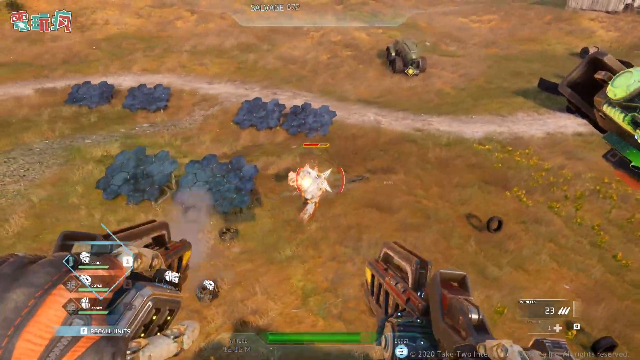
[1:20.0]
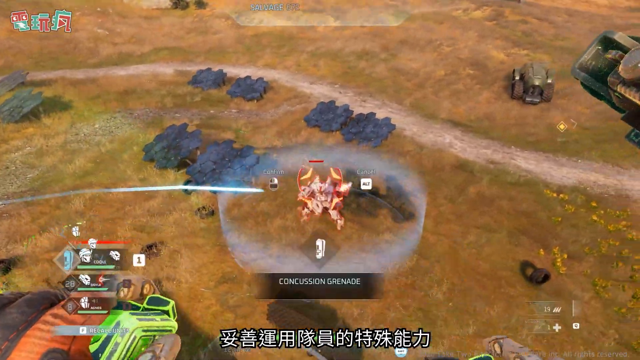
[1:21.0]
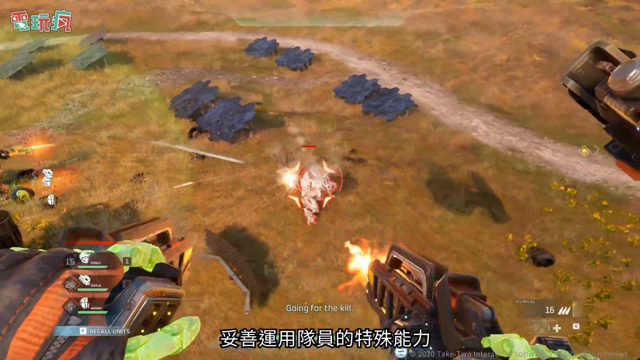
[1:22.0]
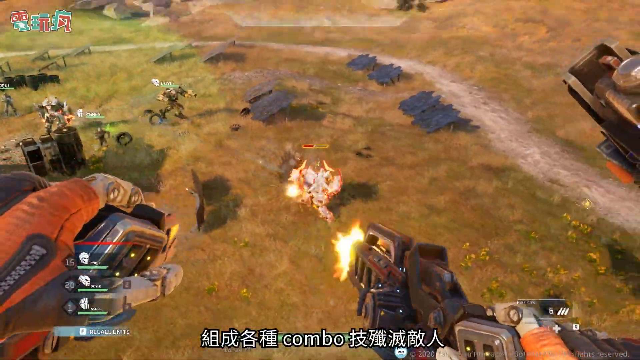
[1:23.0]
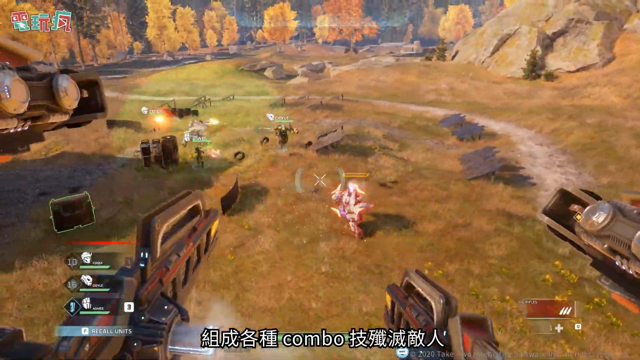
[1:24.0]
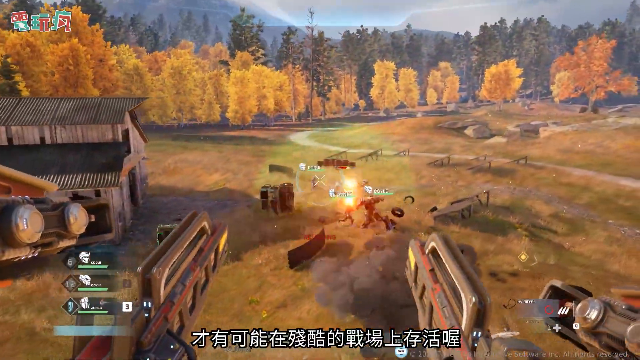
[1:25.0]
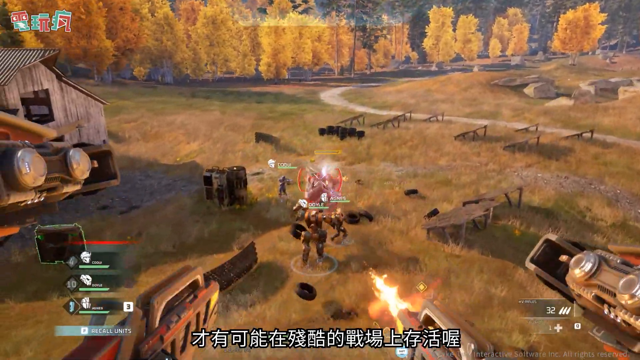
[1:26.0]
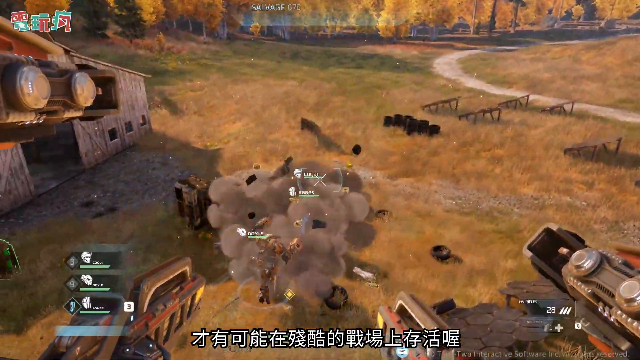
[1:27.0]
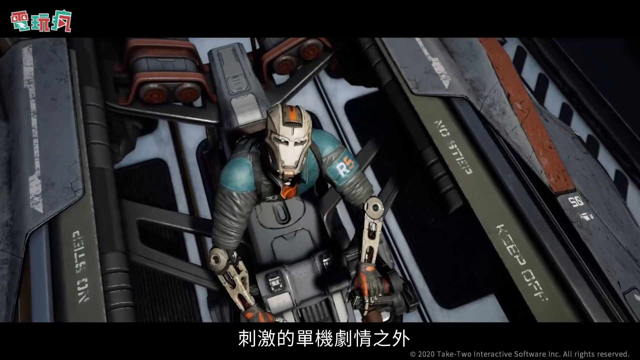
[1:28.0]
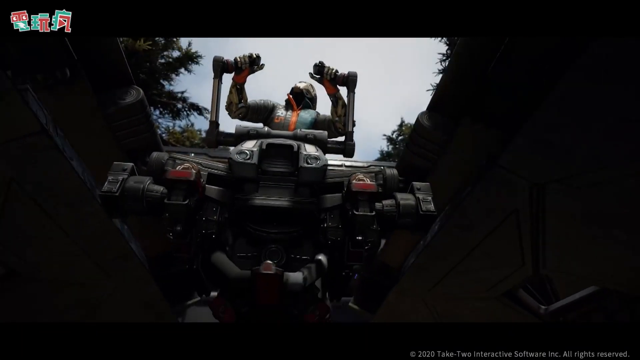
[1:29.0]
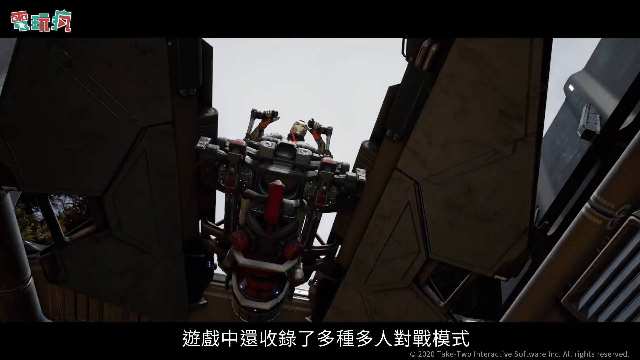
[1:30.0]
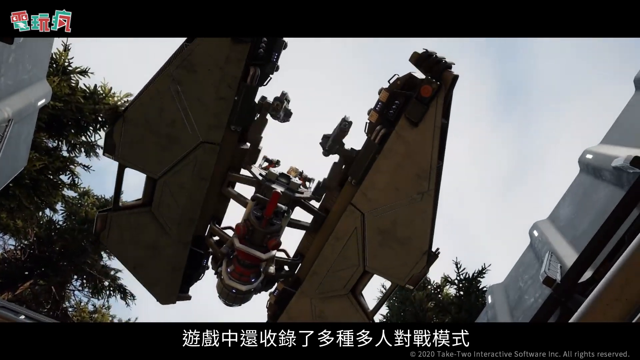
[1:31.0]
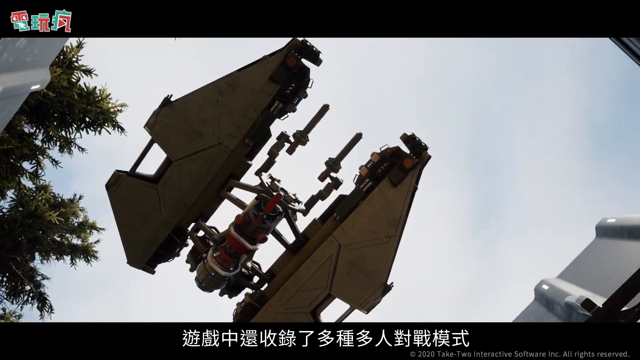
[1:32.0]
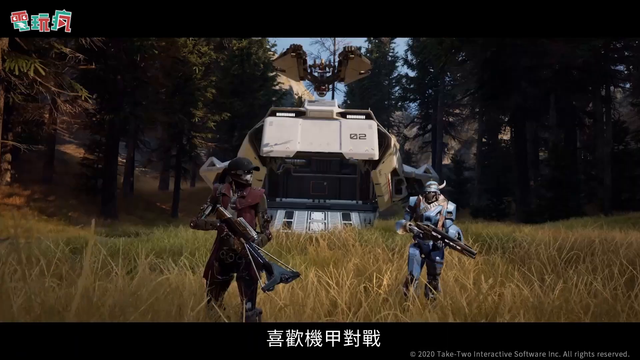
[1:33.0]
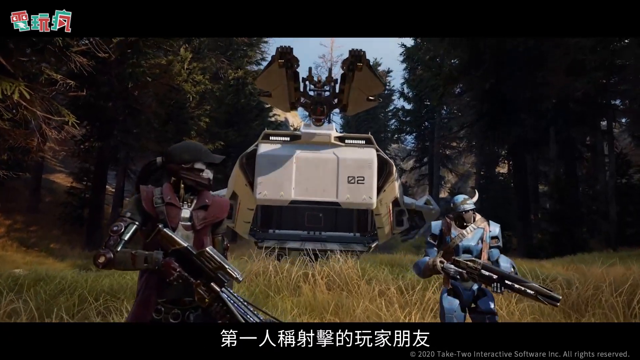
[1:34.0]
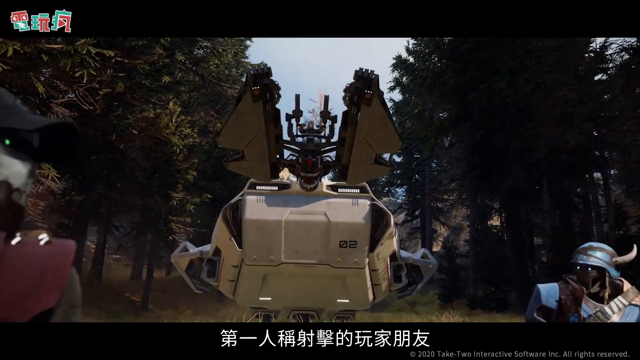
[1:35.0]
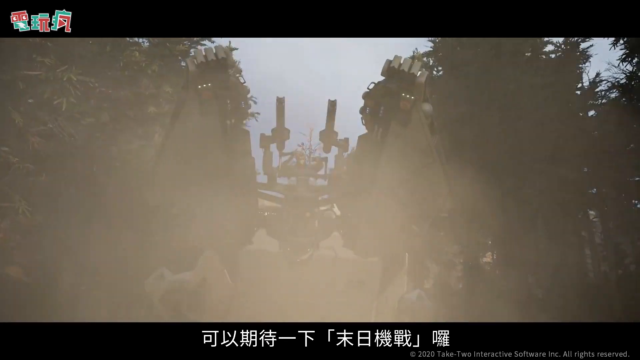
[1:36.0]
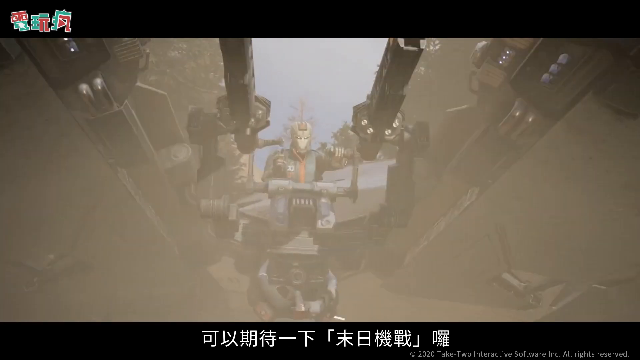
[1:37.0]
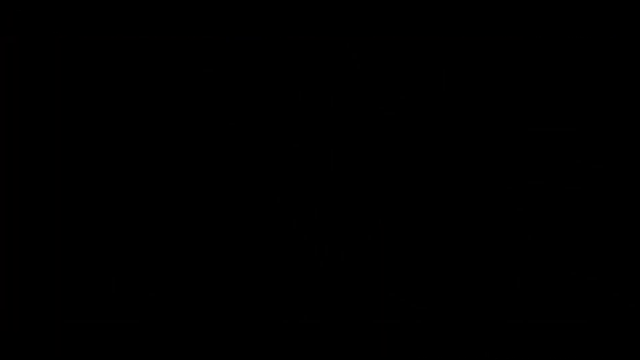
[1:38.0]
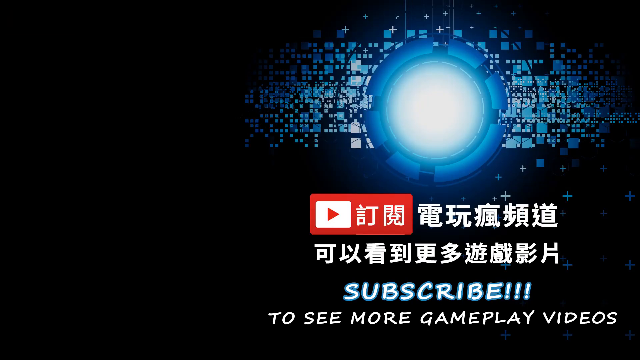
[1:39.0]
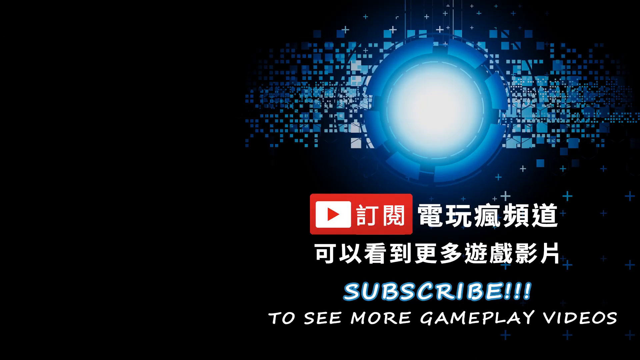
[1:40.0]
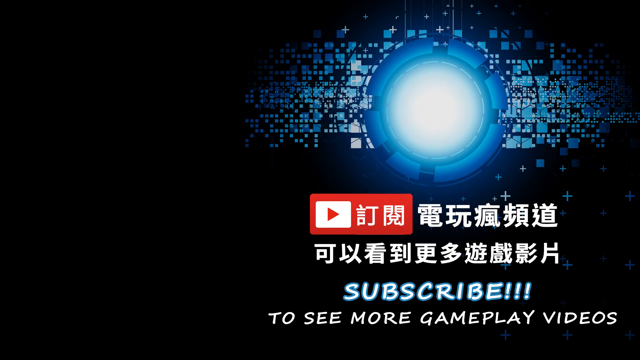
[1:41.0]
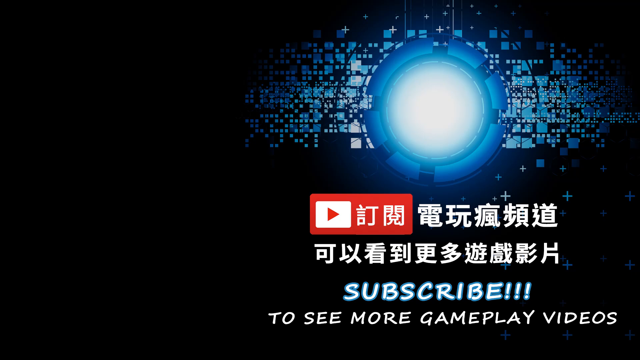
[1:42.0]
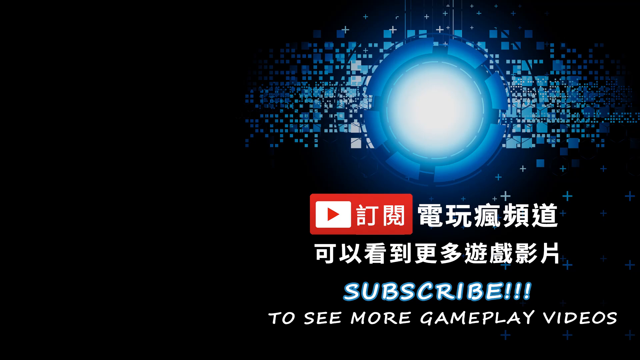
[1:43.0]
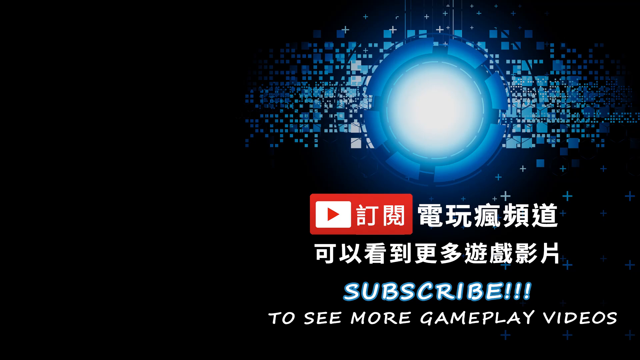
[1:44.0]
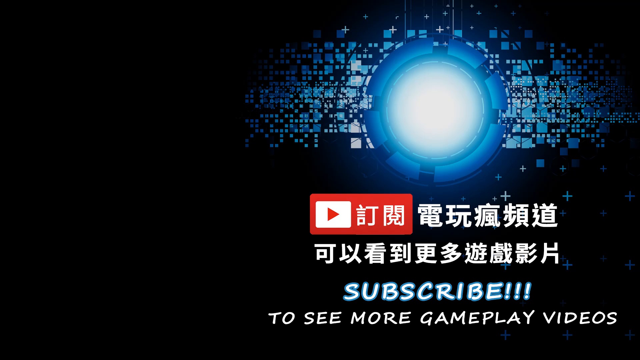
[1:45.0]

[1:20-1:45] A big creature in the center is being shot at; it appears to have a lot of white armor on and is much larger than the other characters. Eventually it has been shot enough that it explodes. The view switches to another vantage point with bright yellow fall-colored trees in the background. Another explosion happens, followed by a close-up of a robotic character in some kind of ship. This character has bionic arms and a gold face mask. A lower view then watches the ship from below as it takes off. The video goes back to a forest scene with two robots dressed like people; the one on the left has a baseball cap and the one on the right has a cap. Both carry guns and stand in front of a tank, in a clearing with many trees behind them. The tank lets out the ship, and on it is another robot holding the controls to two guns in front of it. The video fades out to a screen with the YouTube symbol, and underneath it says "subscribe to see more gameplay videos."